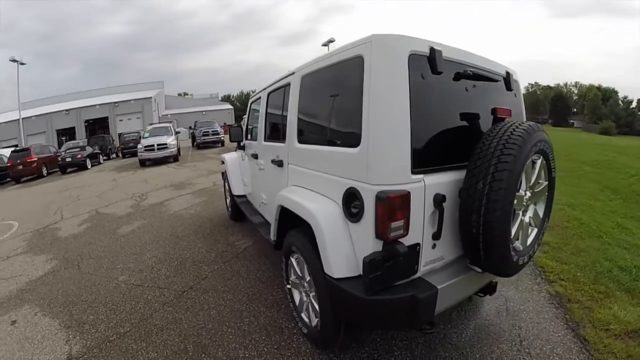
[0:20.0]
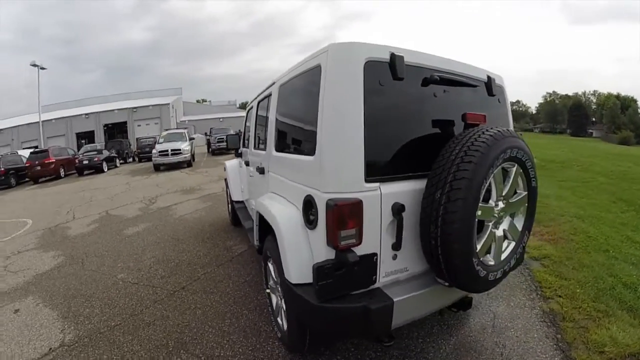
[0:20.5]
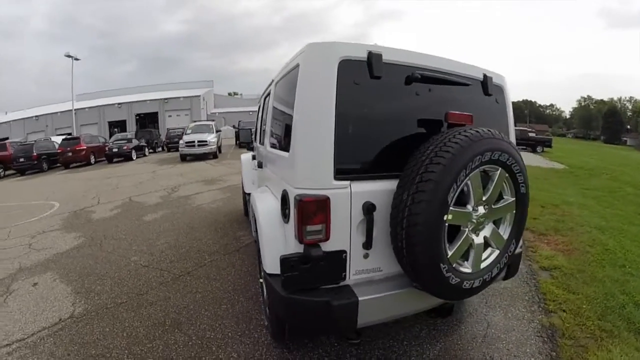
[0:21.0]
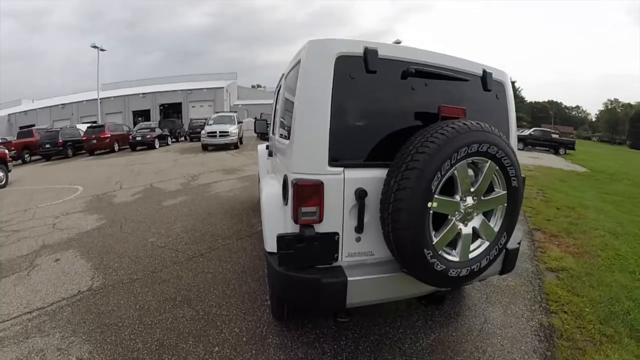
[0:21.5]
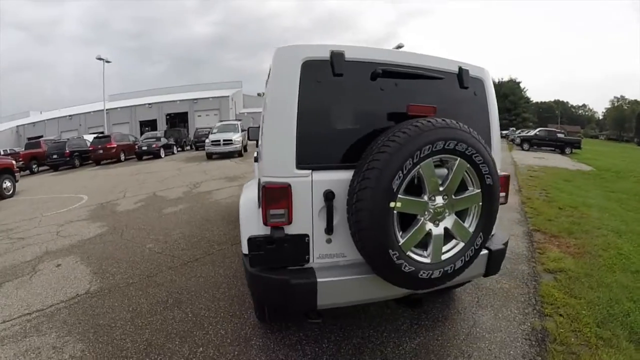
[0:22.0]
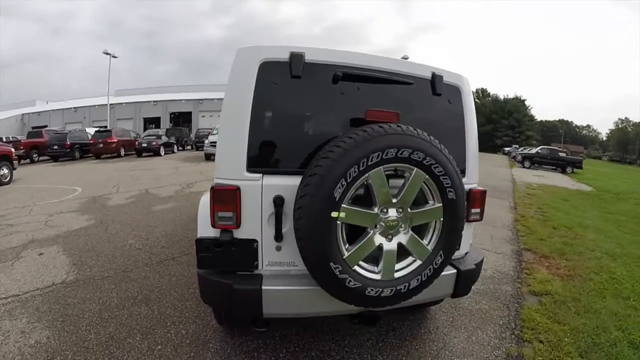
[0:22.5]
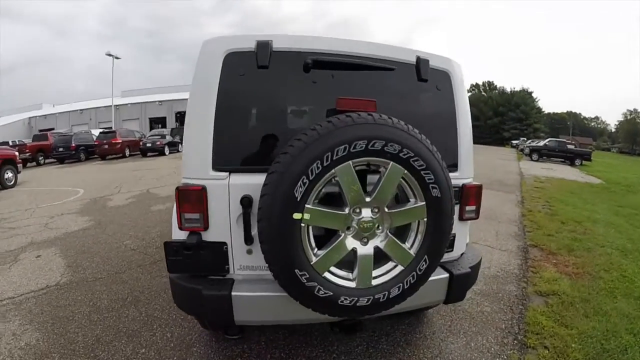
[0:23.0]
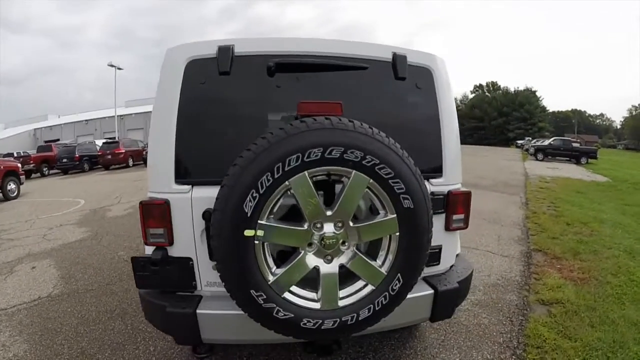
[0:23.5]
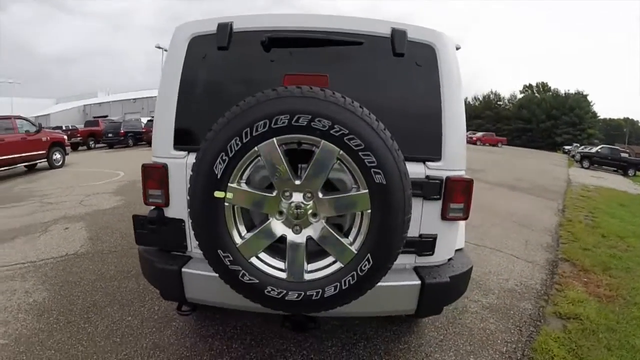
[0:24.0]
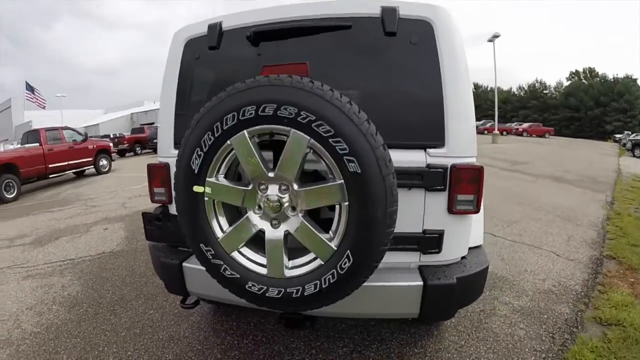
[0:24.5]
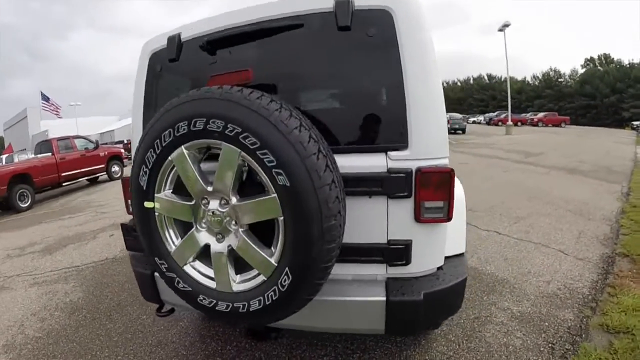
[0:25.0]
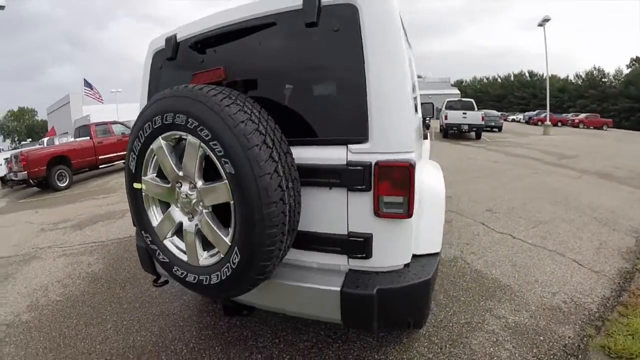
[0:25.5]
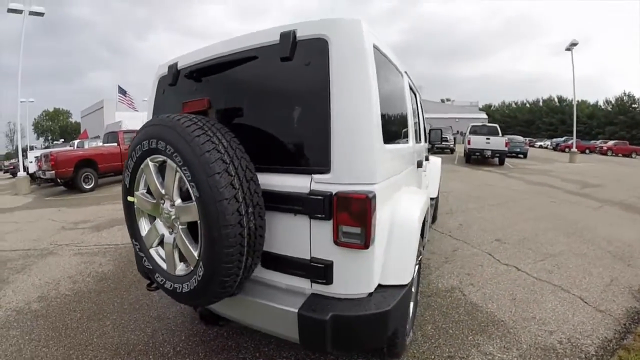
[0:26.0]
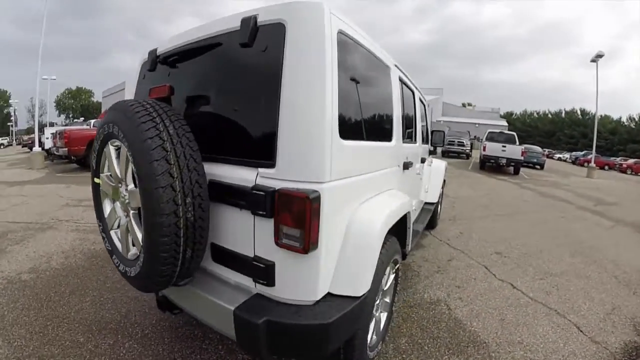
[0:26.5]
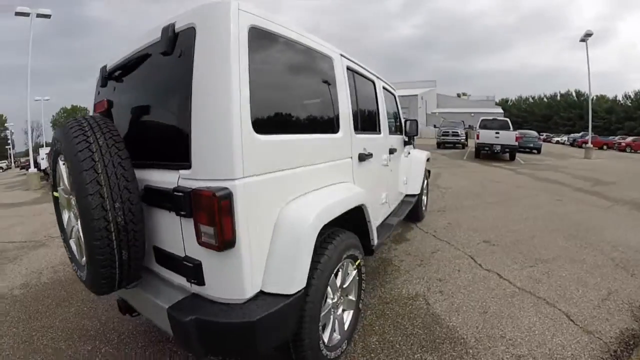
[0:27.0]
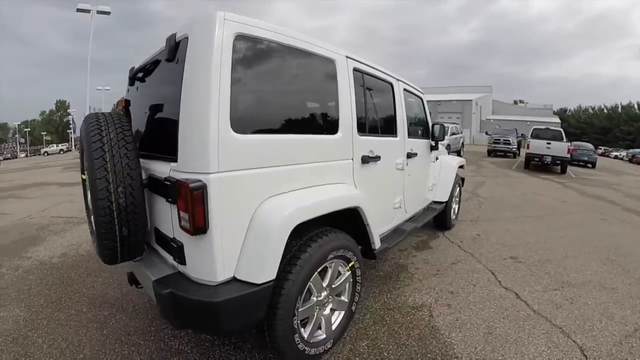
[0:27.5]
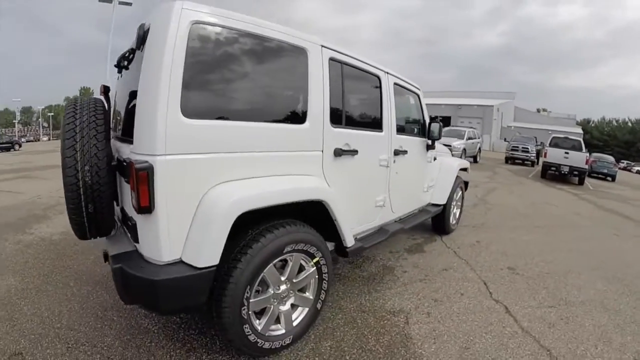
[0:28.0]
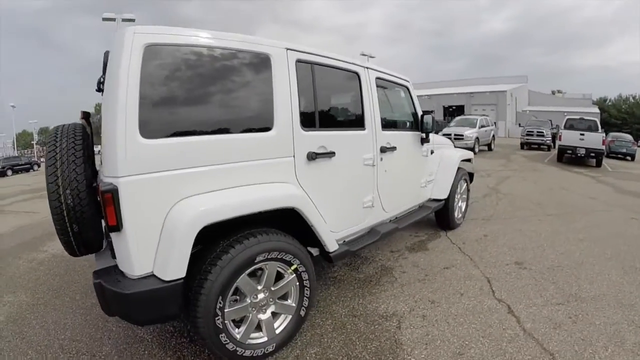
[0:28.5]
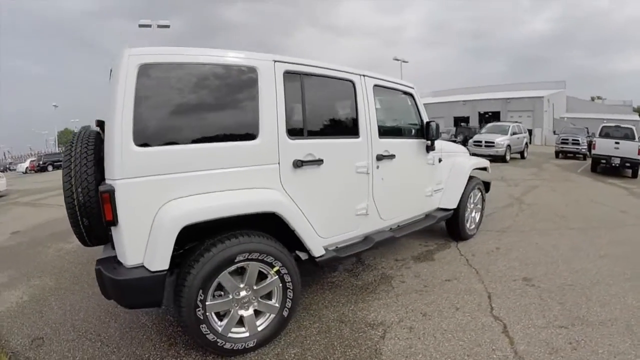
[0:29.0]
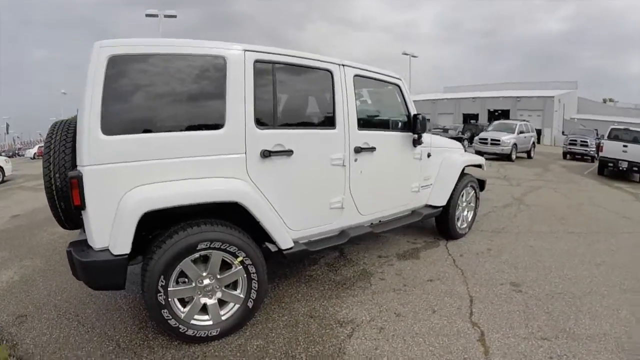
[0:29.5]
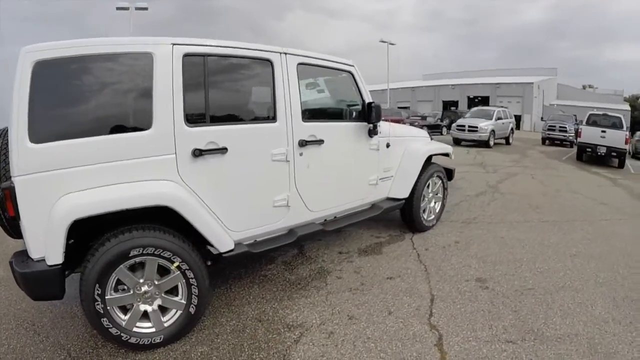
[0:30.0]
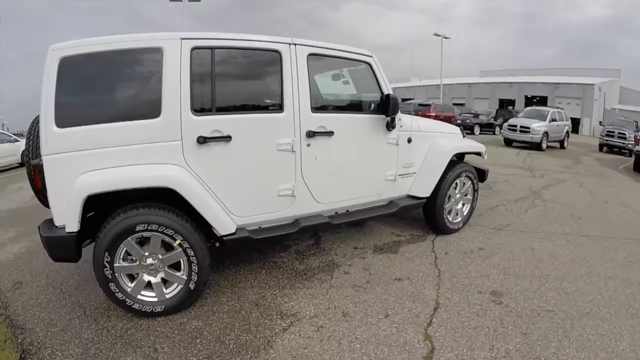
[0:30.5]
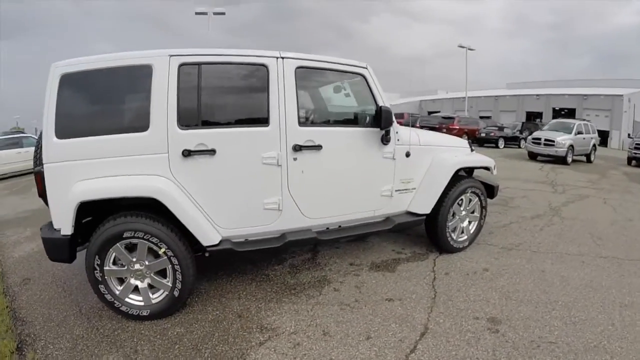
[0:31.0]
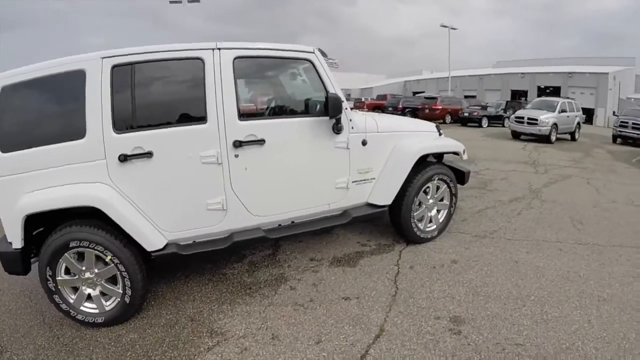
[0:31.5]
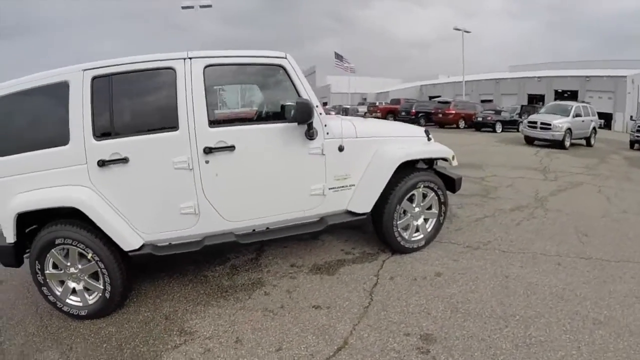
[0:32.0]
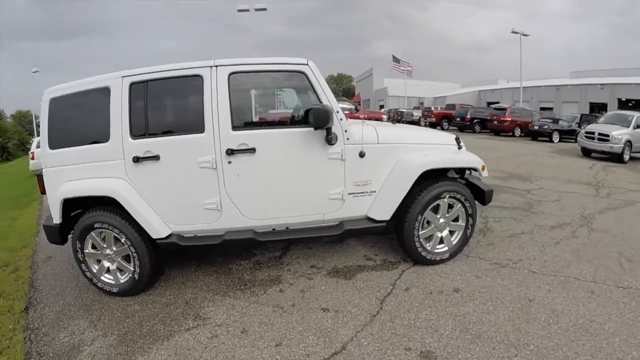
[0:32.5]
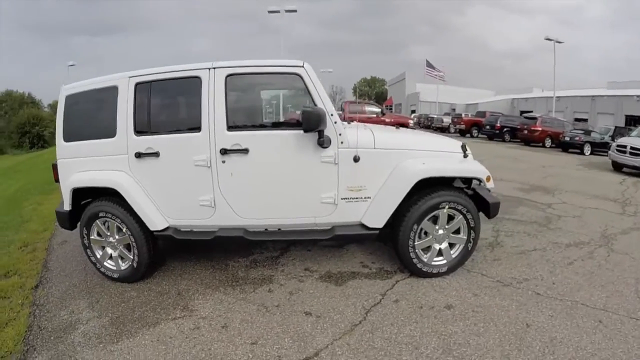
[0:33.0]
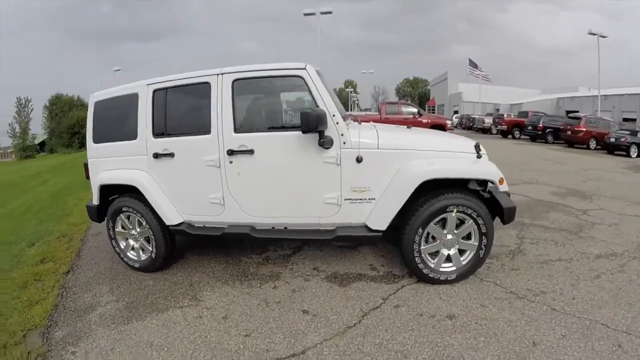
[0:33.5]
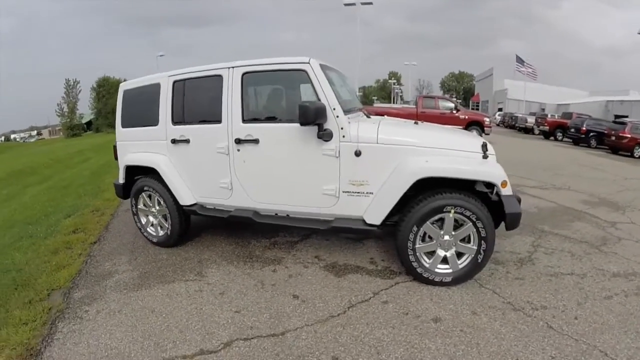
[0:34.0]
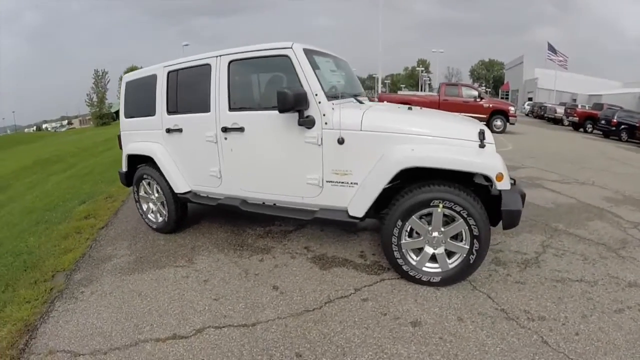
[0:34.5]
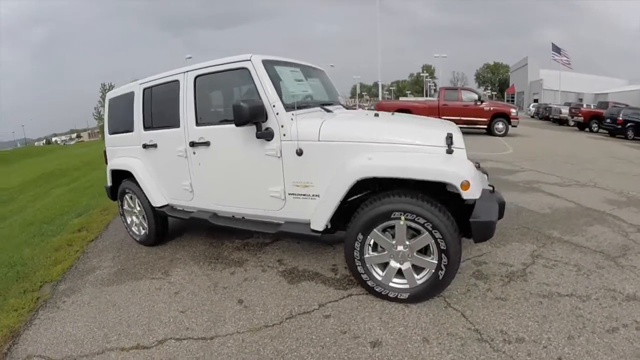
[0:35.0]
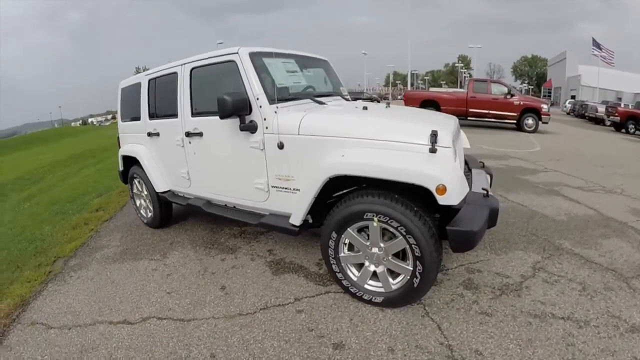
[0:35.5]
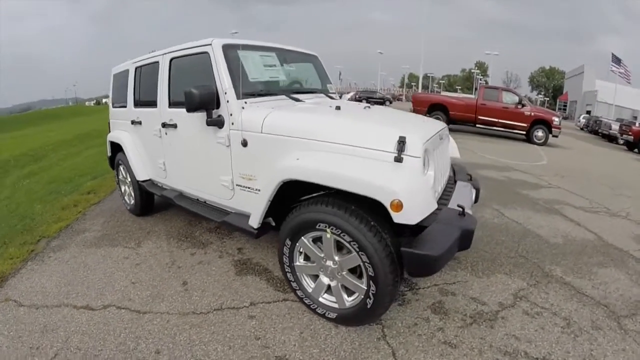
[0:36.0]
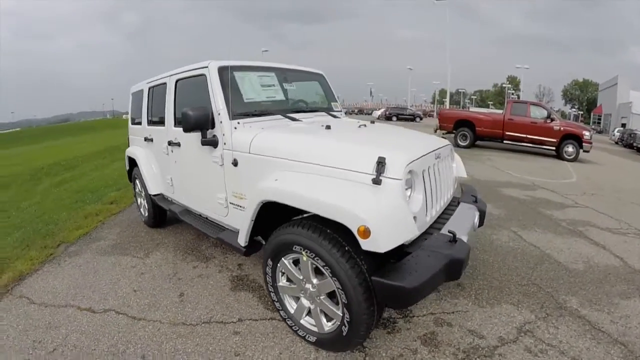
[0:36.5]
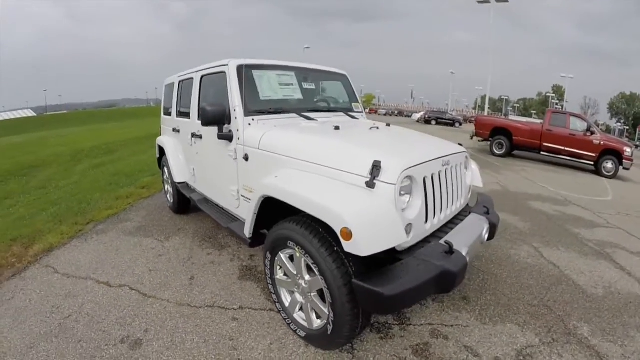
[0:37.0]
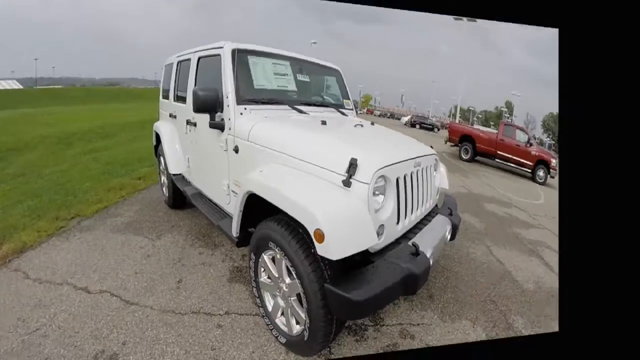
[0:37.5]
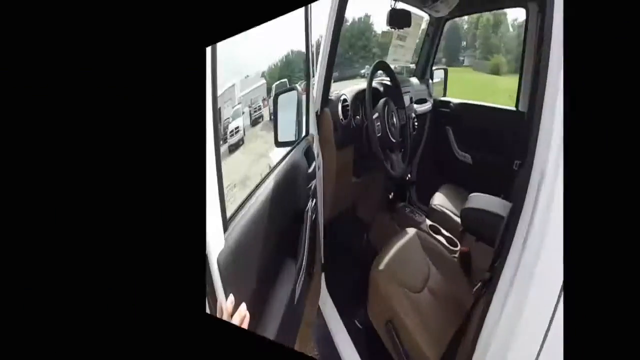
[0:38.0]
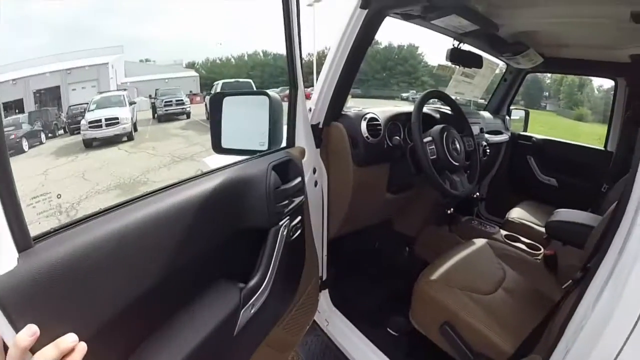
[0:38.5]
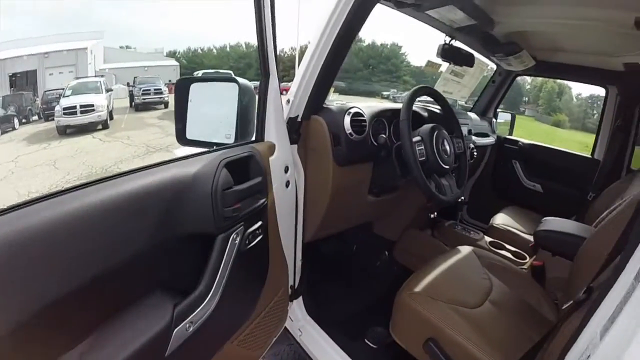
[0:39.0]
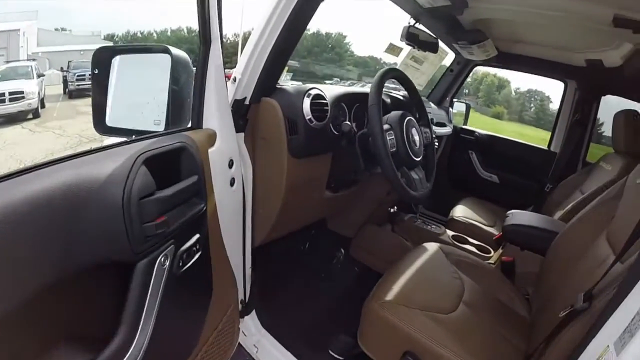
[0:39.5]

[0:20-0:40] The white Jeep is for sale on a car dealer's lot. The camera focuses on the back tire, which reads "Bridgestone" in fancy white lettering on the black tire. The rims look shiny, brand new and silver chrome colored. Other vehicles for sale are in the background, some of which look more like trucks, including burgundy trucks and a navy truck. The camera then comes to the right, passenger side of the vehicle, showing the black rear view mirror. After a flip in the video, the driver's side door is being opened, revealing a brown interior and the black wheel.